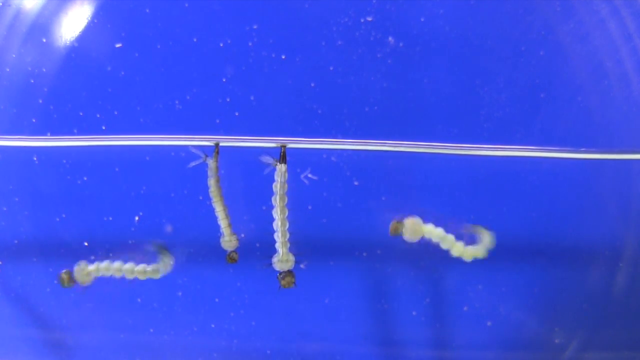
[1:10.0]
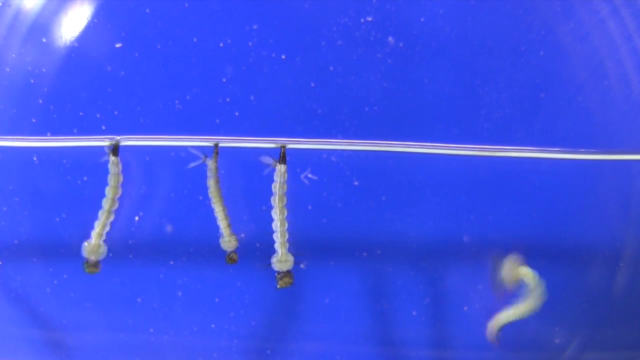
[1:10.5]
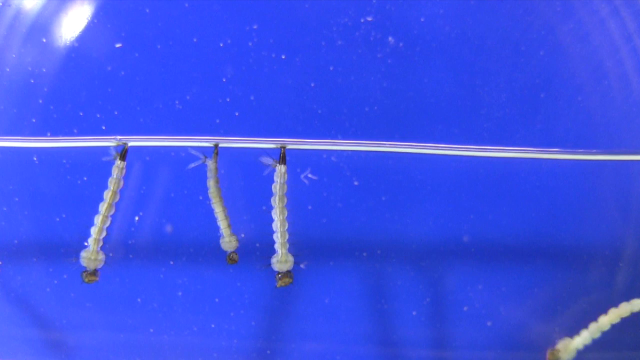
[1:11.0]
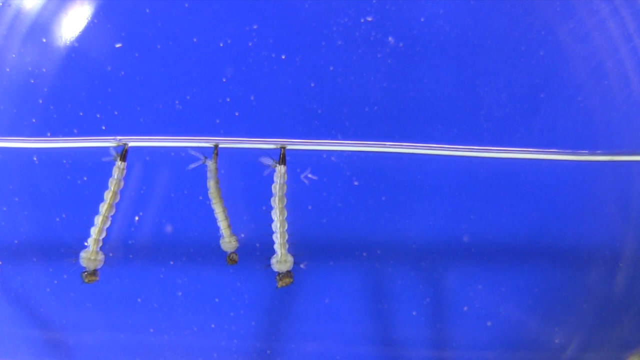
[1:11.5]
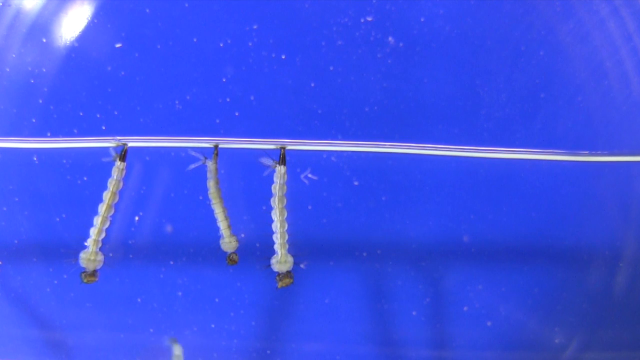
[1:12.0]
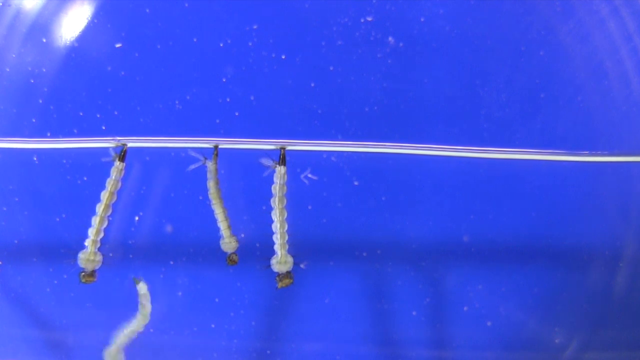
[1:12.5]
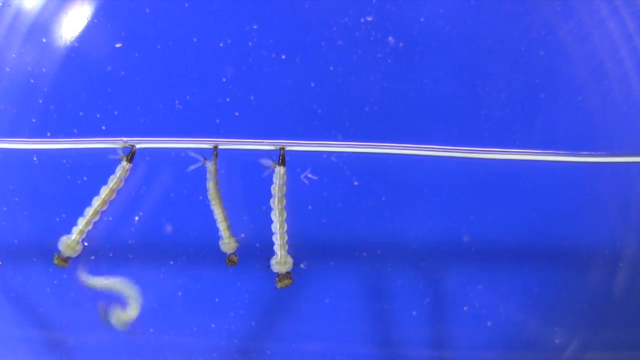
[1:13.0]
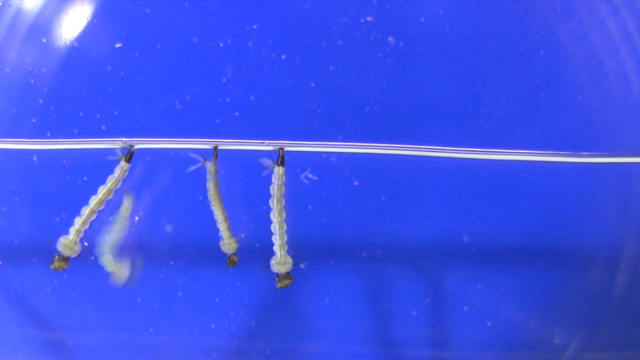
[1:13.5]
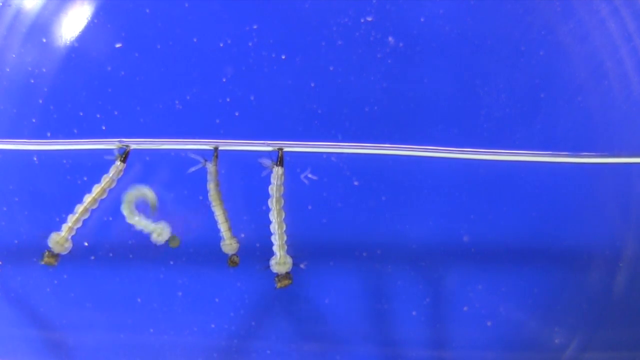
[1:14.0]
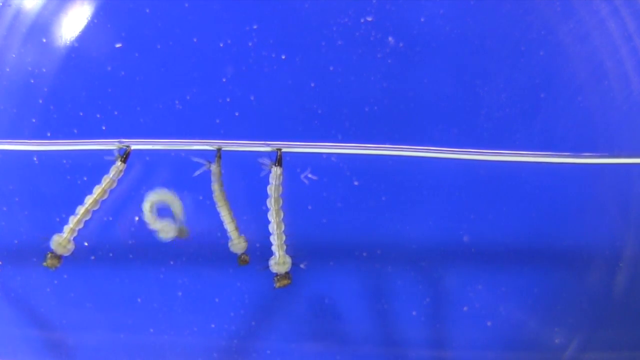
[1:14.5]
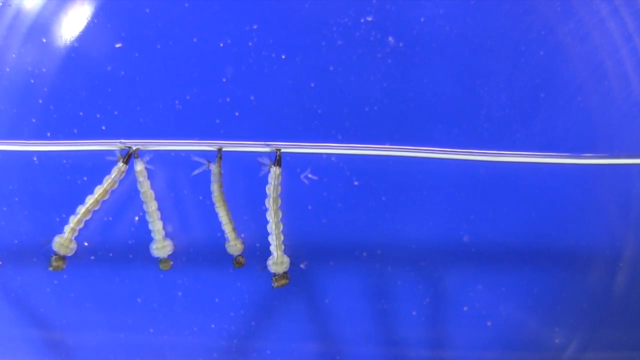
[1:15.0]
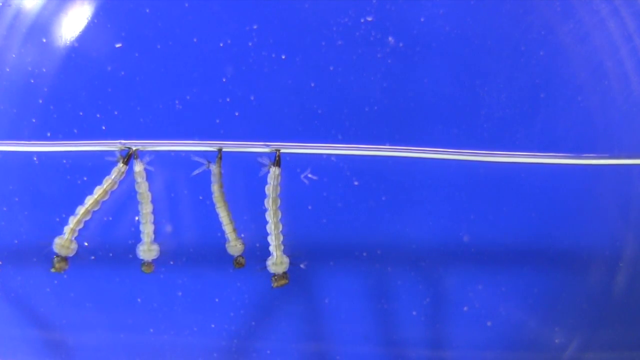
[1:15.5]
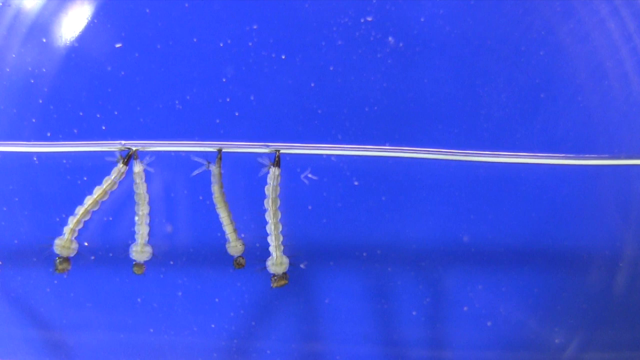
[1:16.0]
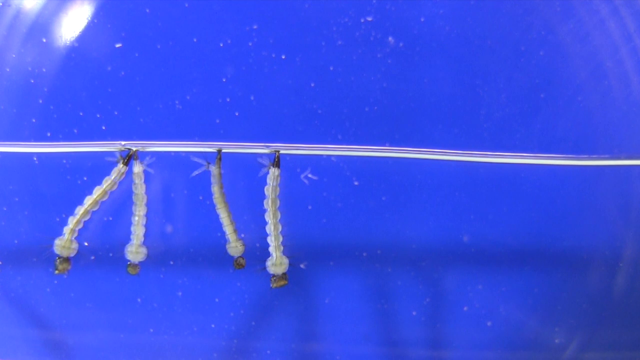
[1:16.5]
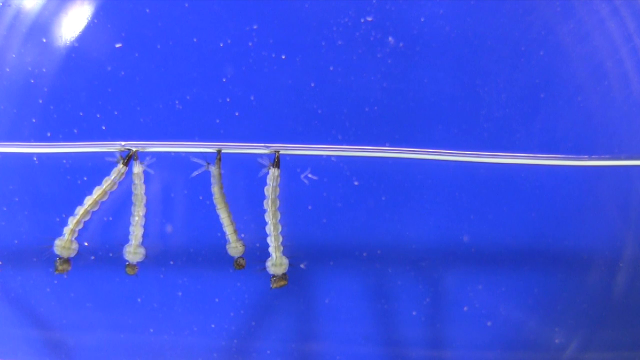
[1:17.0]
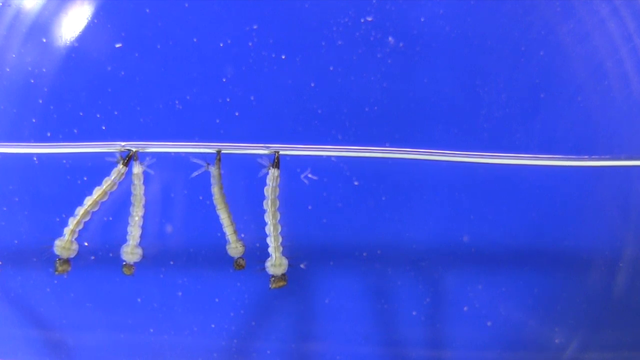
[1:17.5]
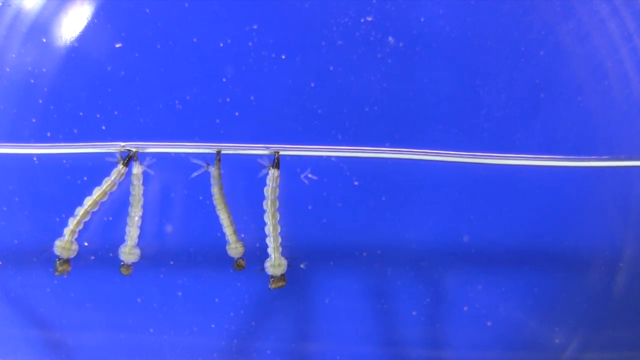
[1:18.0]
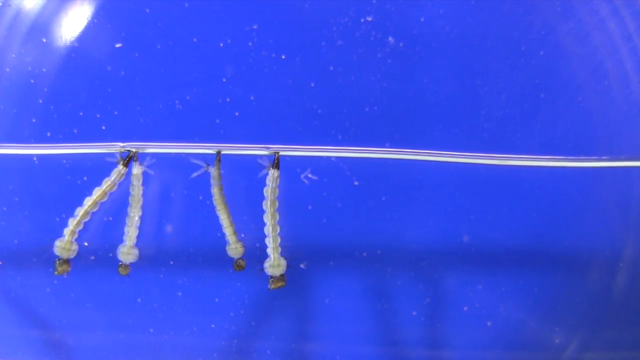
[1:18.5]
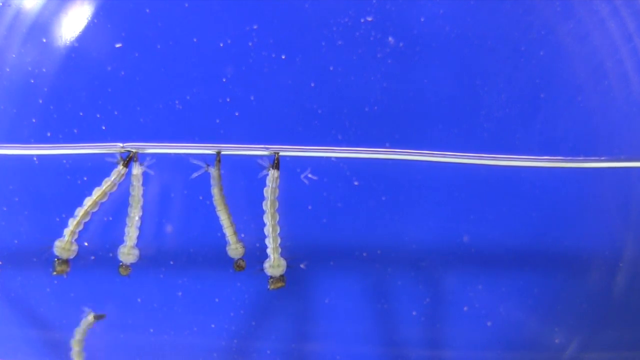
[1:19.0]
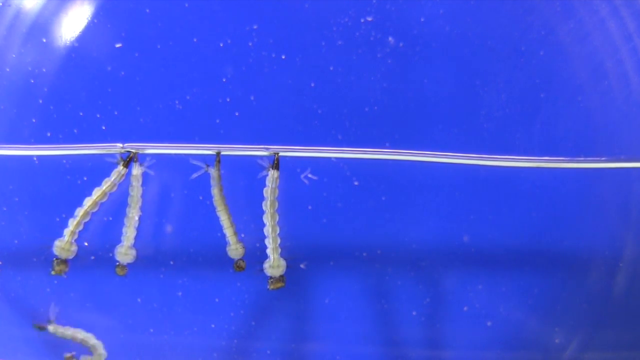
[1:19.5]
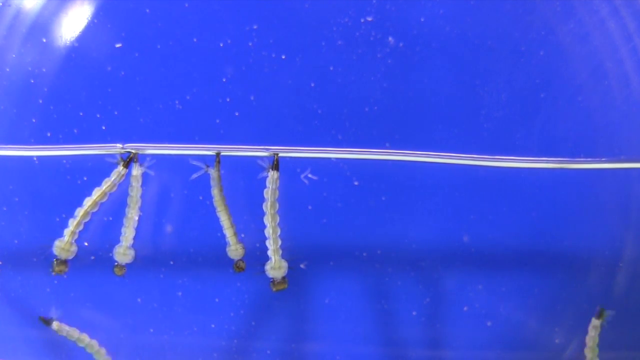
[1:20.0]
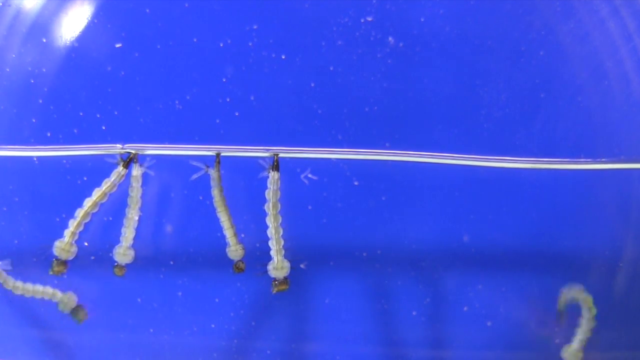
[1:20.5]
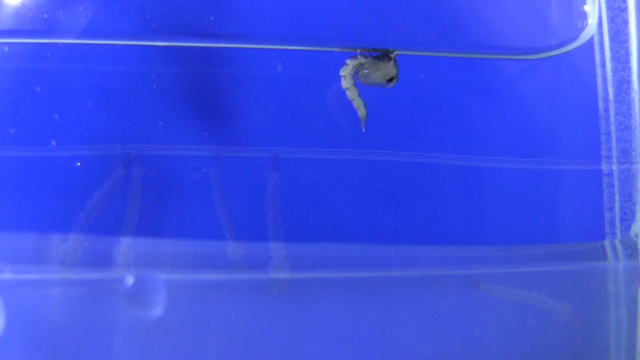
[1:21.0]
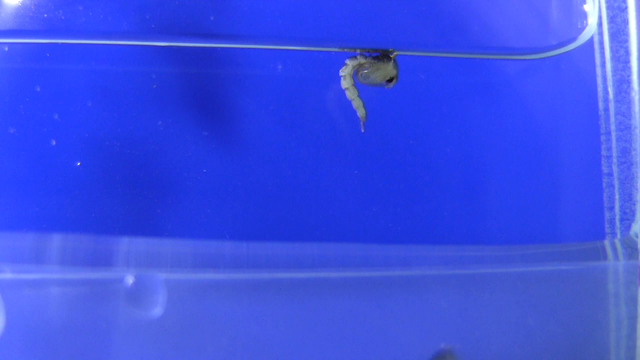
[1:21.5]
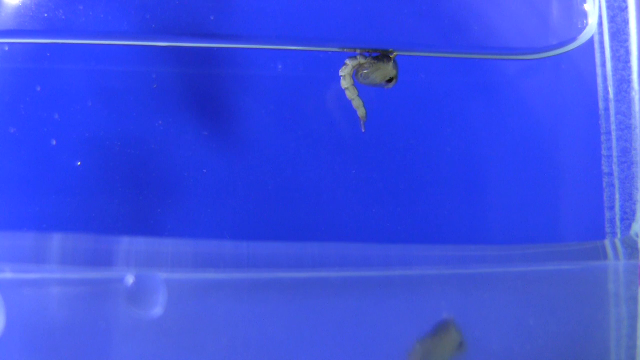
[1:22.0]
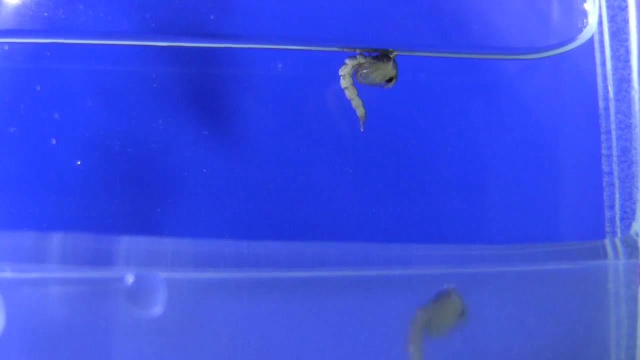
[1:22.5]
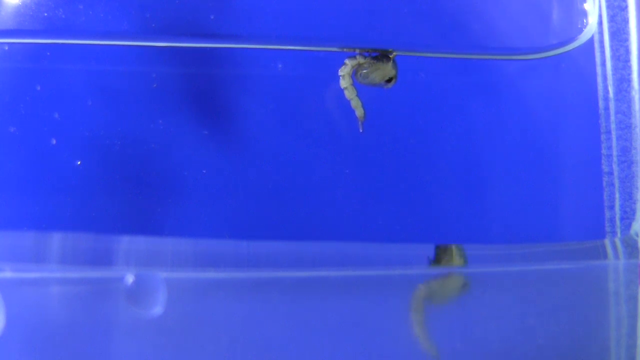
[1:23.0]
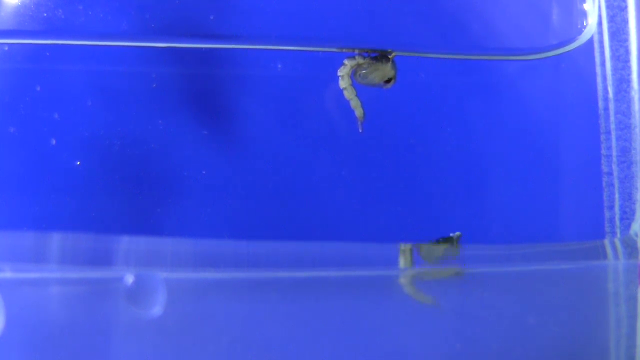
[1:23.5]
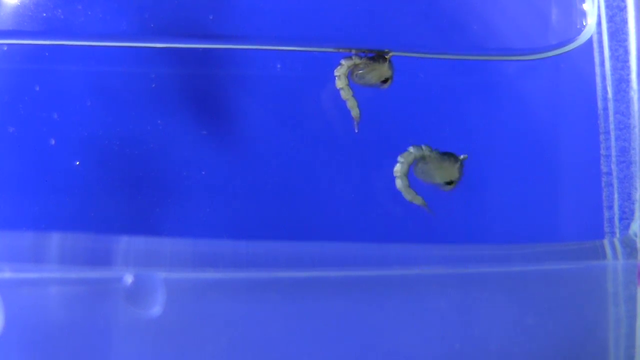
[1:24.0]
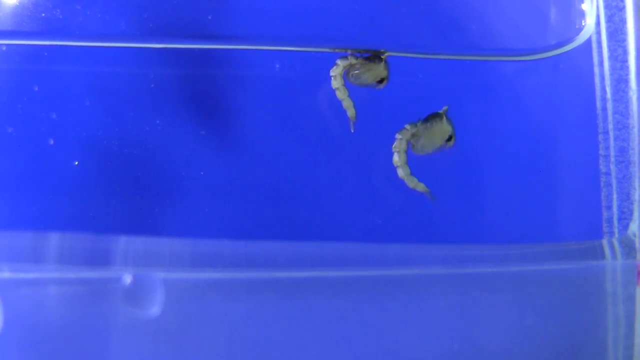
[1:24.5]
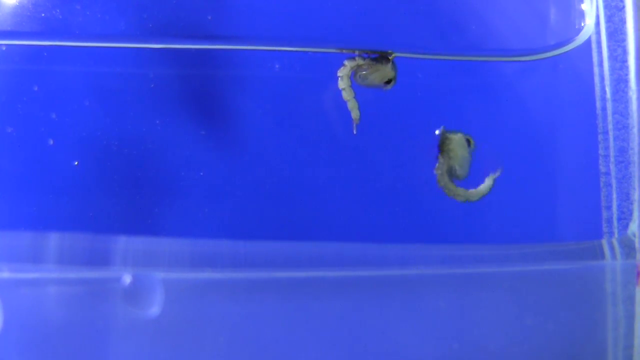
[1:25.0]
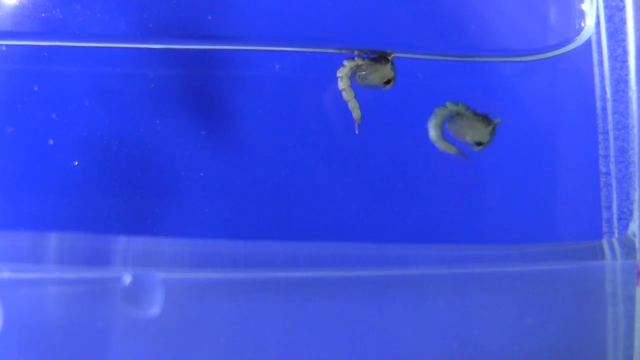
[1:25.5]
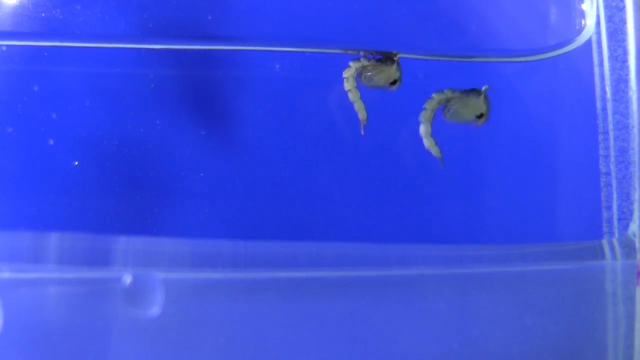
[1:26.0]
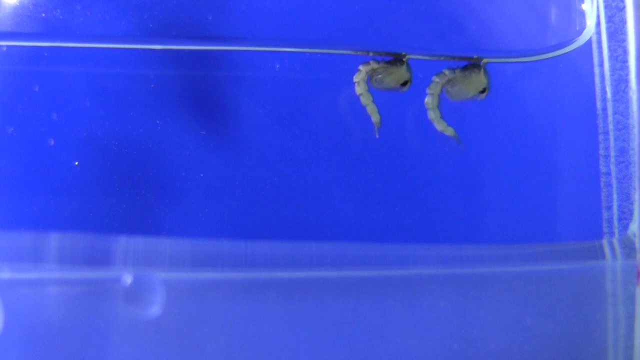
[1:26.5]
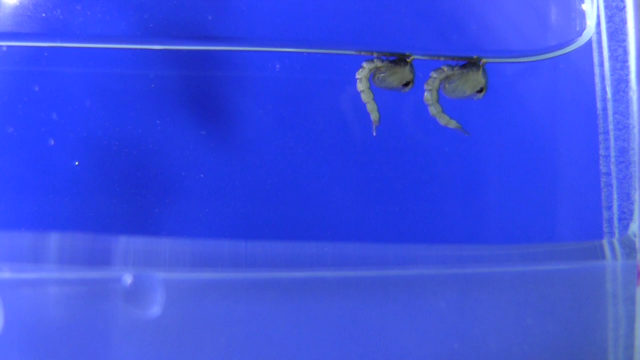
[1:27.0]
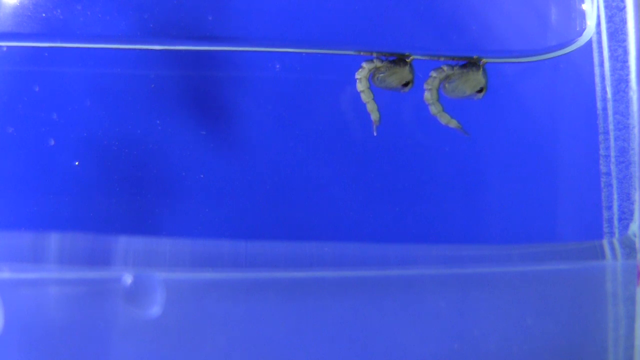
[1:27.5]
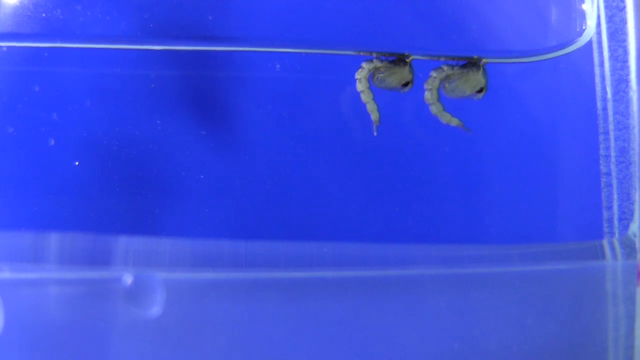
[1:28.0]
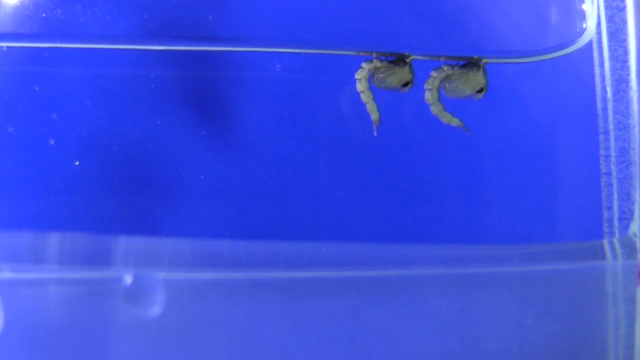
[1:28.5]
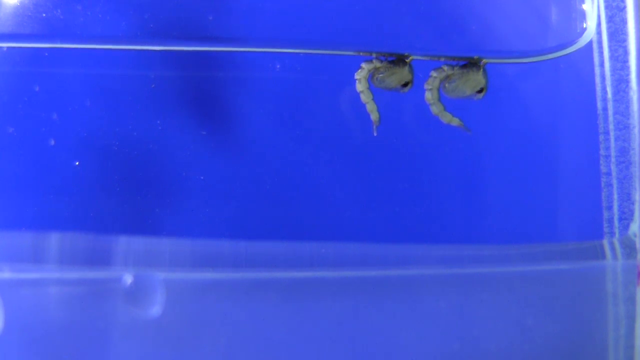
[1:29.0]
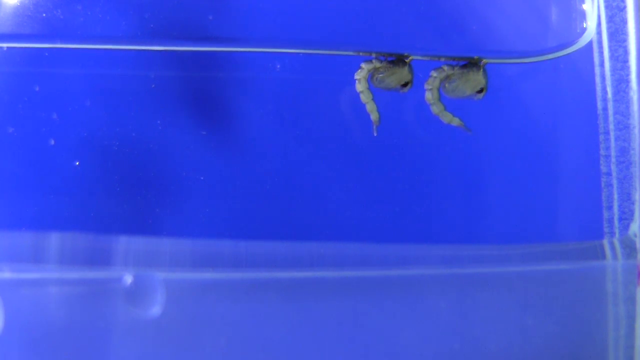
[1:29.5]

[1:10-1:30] Against a blue background there is a silver strip with four worms. One worm tries to attach itself to the silver strip and succeeds, and another follows shortly after, so both attach to it. All four worms are now attached to the silver strip and keep maneuvering. The scene then changes to show only one worm against a blue background; a second worm comes on camera, joins the first and also attaches to the silver strip. They look like they are in water, in a blue container, and it looks moist. Both of their heads look a bit swollen compared with before, and their bodies are a bit curved toward the end.